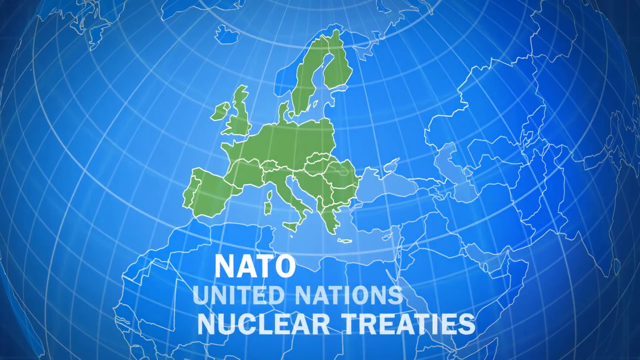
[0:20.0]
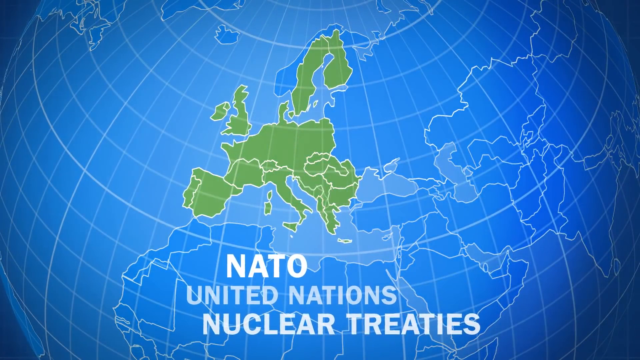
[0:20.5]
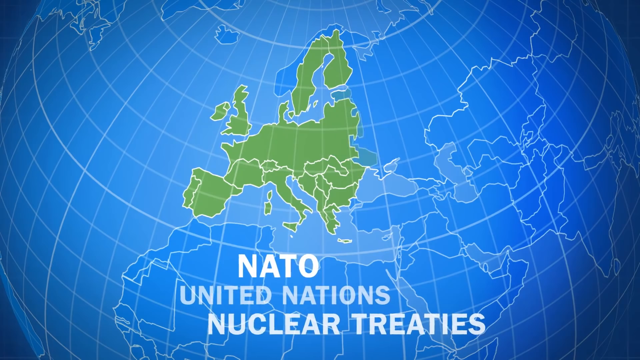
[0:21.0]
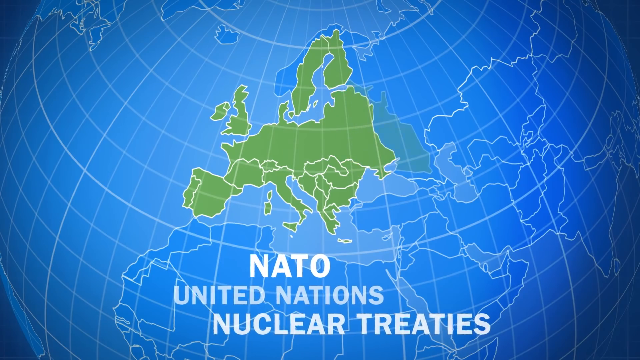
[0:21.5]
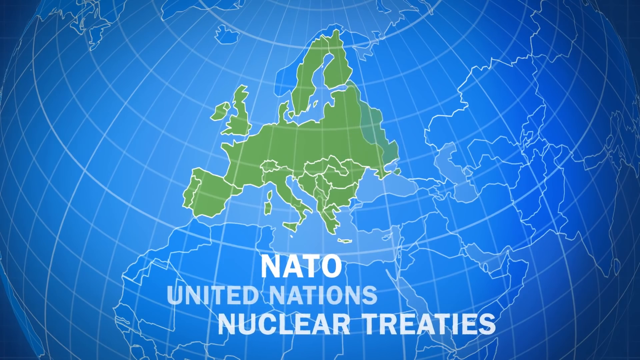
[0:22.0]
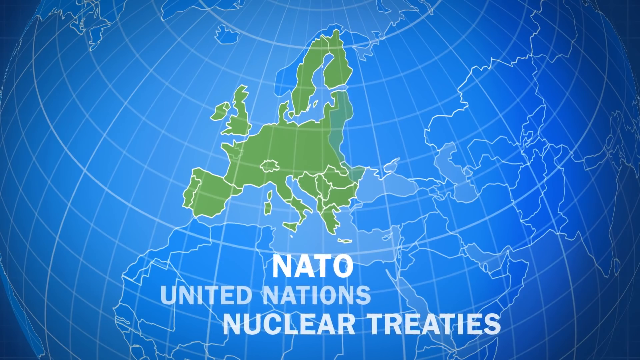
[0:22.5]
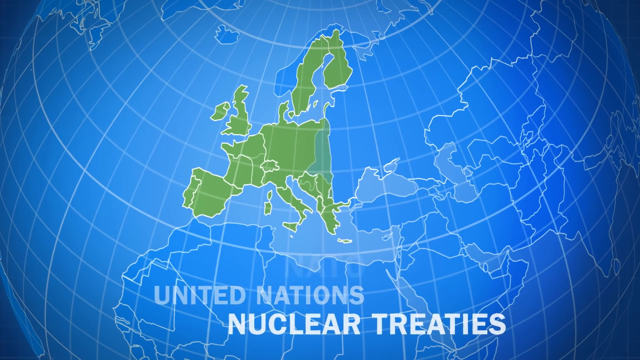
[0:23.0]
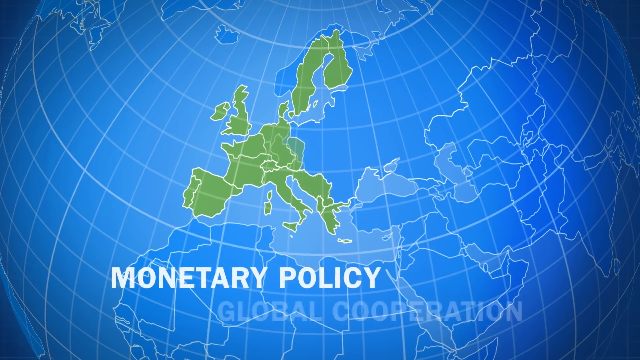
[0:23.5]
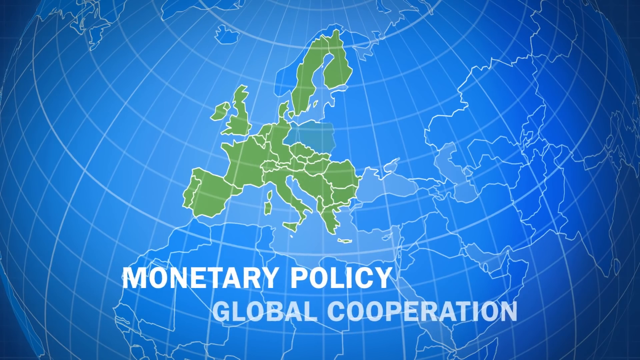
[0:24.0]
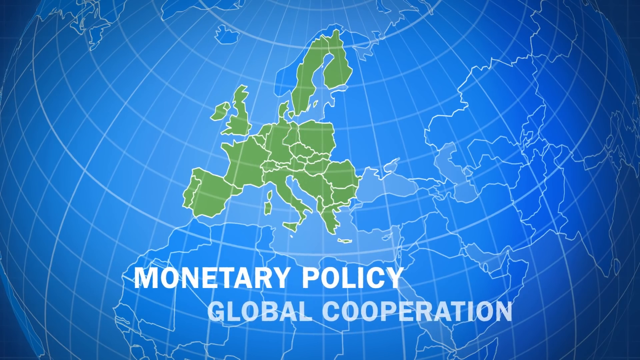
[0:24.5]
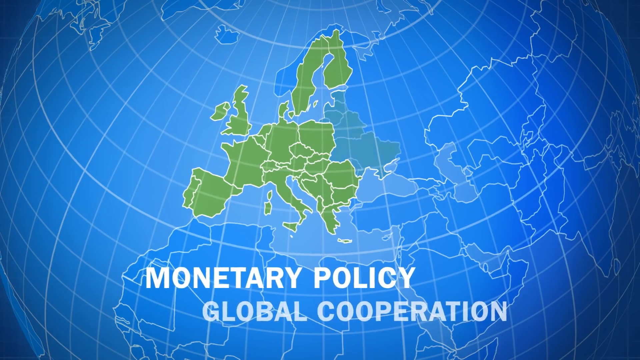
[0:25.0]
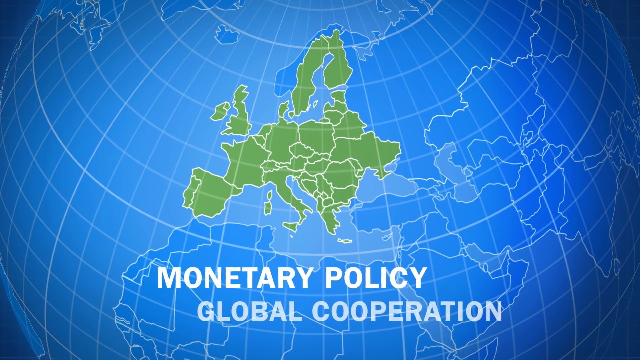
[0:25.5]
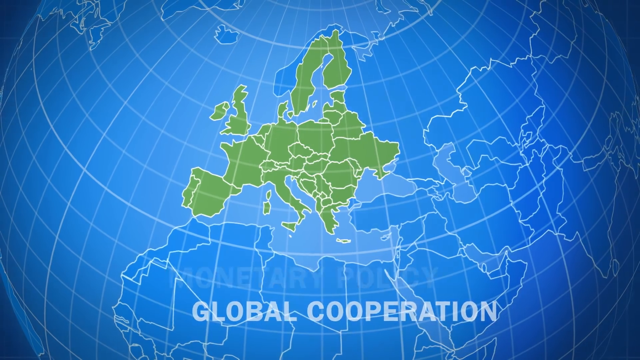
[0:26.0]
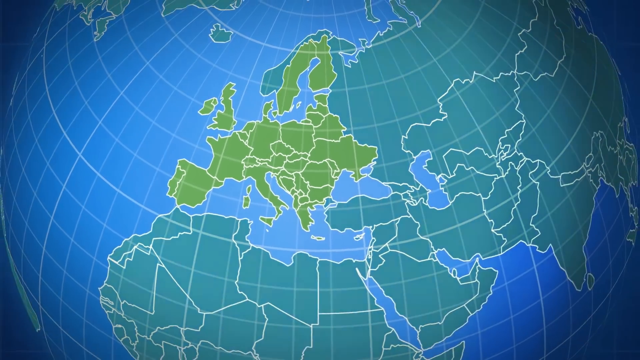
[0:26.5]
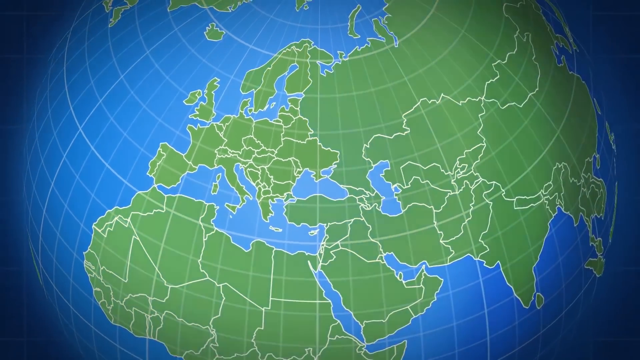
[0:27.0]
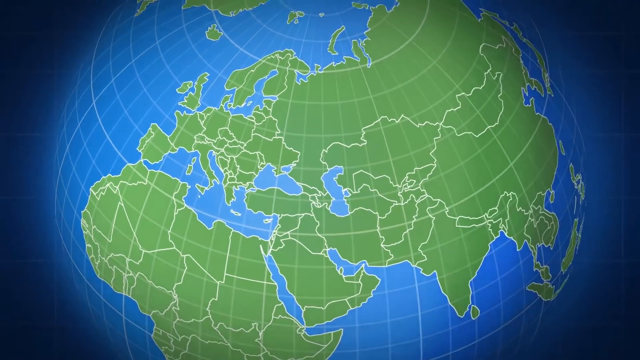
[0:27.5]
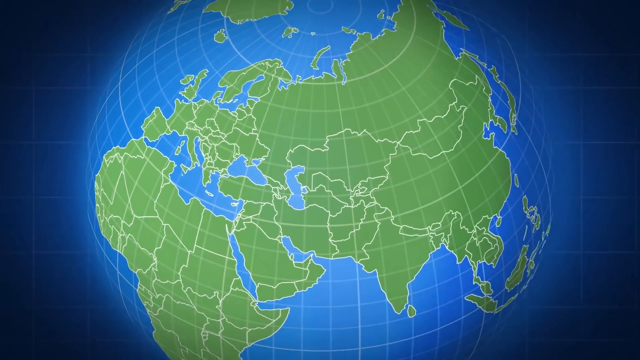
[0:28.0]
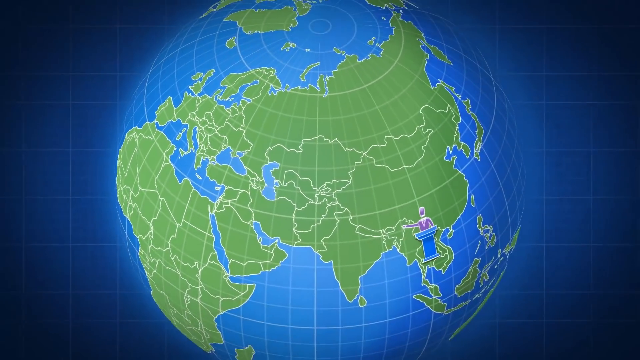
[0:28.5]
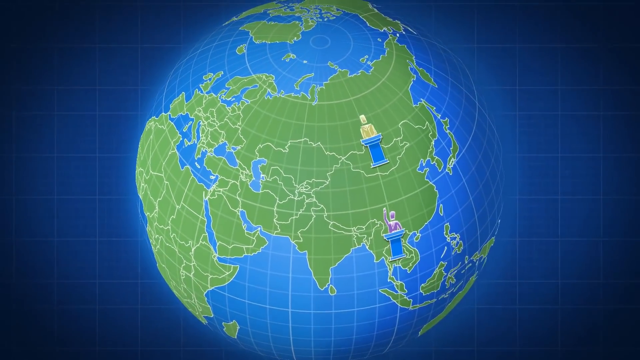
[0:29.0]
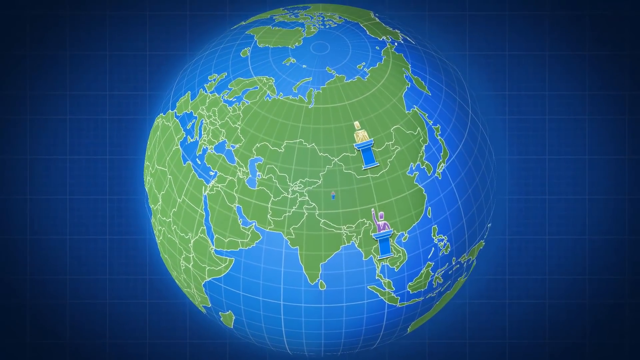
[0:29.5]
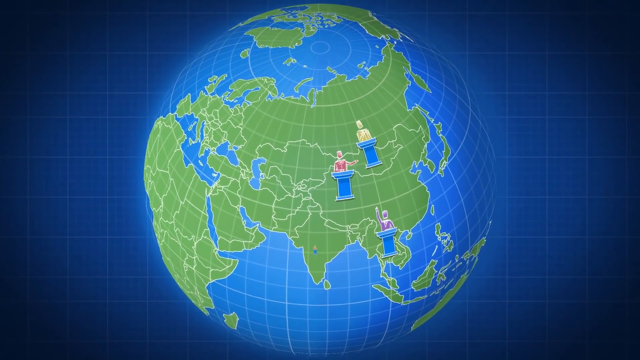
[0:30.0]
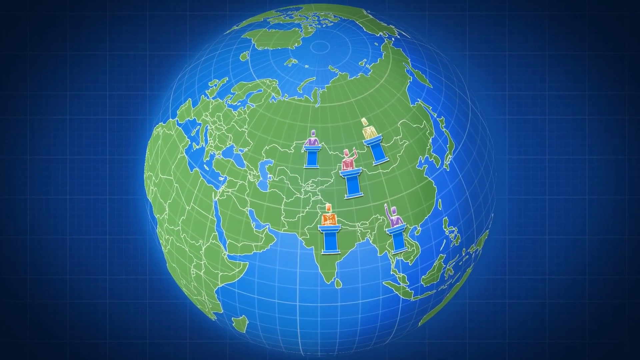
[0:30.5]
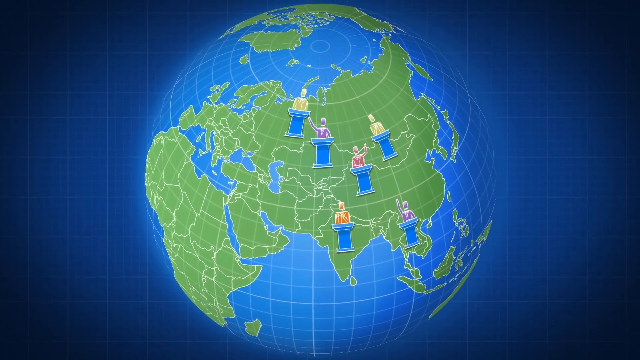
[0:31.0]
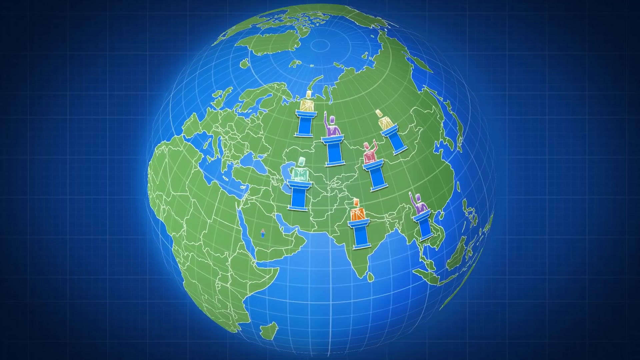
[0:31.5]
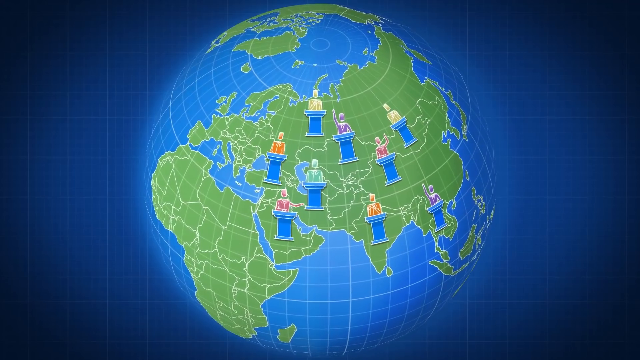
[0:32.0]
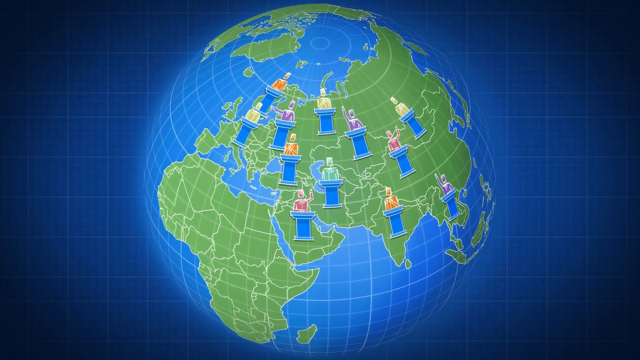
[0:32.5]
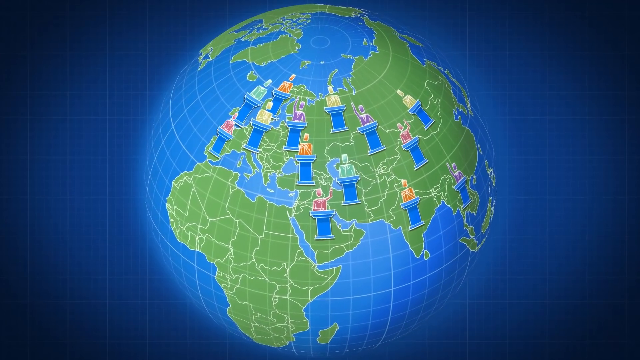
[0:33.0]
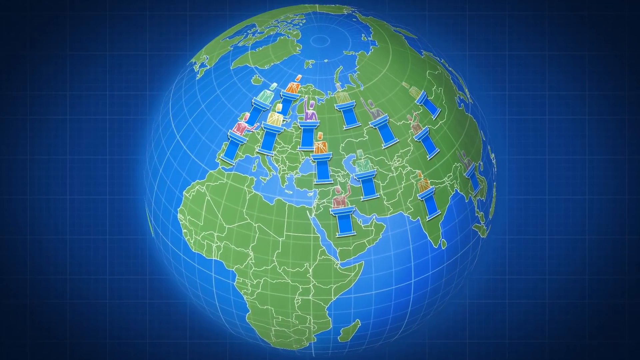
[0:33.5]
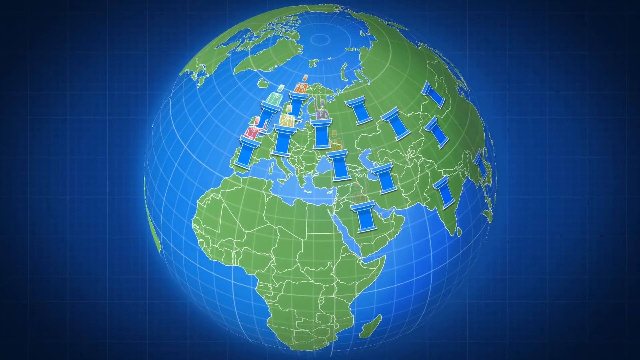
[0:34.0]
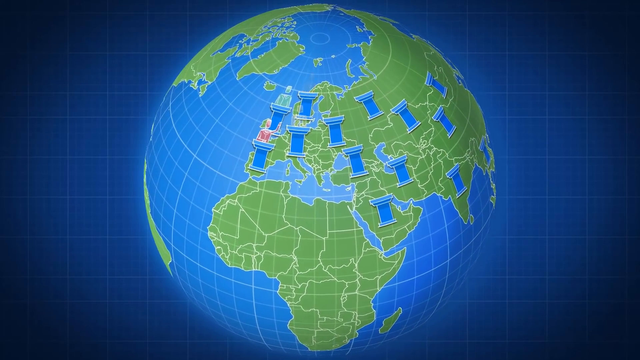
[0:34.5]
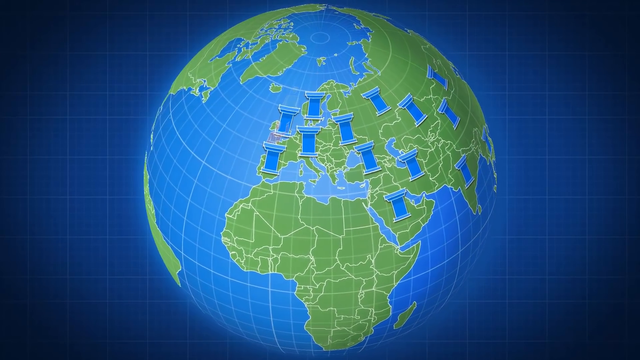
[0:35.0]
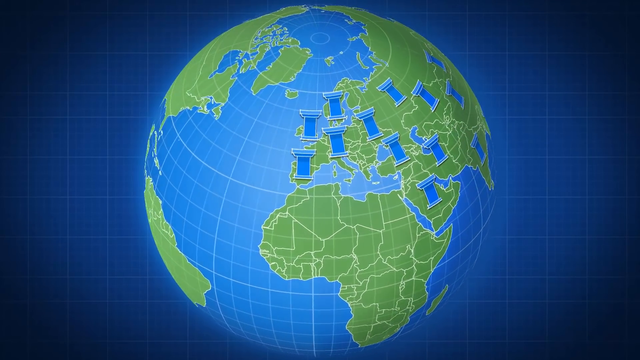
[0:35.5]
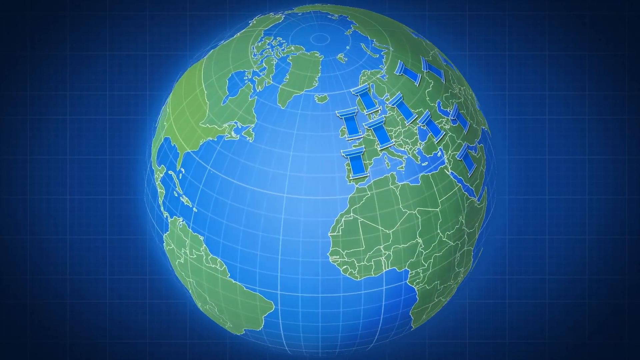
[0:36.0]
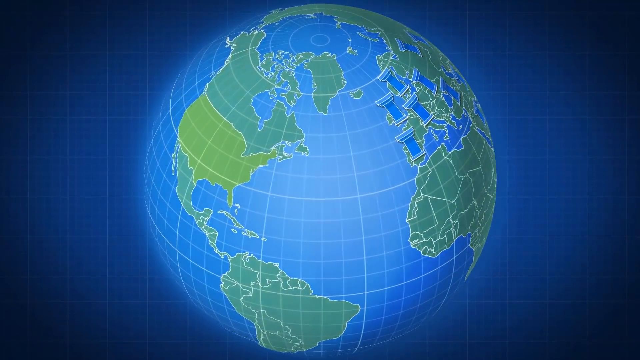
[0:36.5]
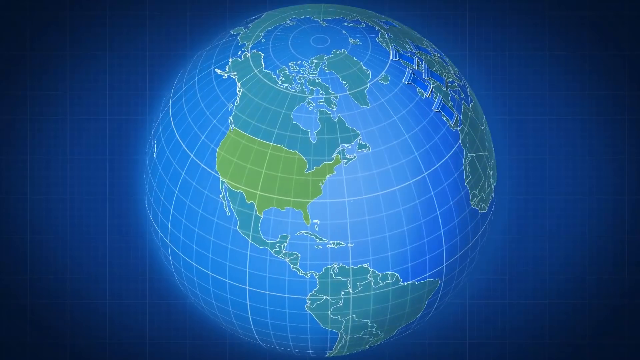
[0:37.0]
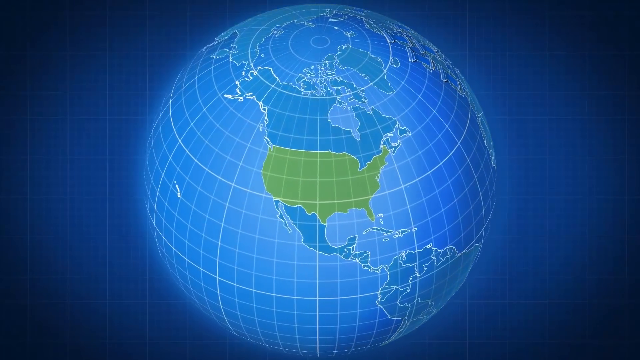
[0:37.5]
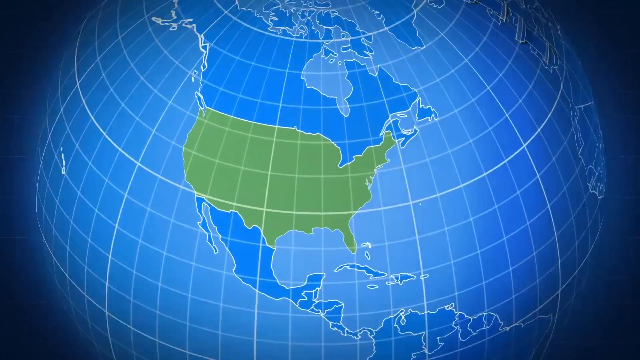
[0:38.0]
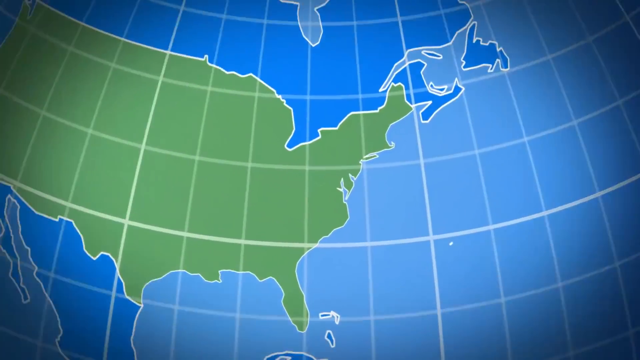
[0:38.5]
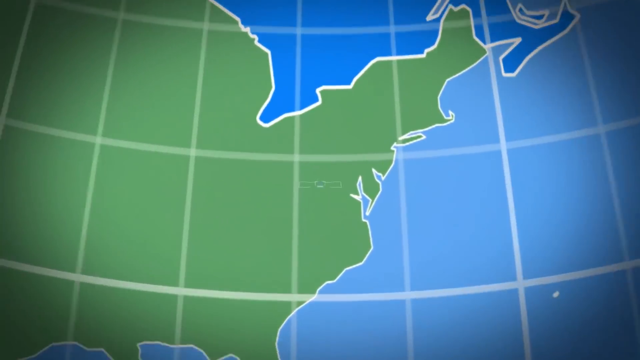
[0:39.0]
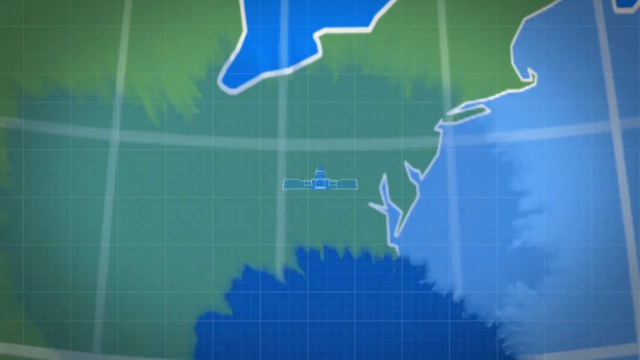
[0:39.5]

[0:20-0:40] A globe is shown, with text that appears to name different categories such as "nuclear policy" and "global cooperation." The world is then shown with an animation of people at a stand. The view zooms in a little to the United States and the logo of the White House. The words "NATO" and "United Nations" appear. The graphics are mostly blue, and when countries are highlighted, they turn green. The words go by a bit fast.